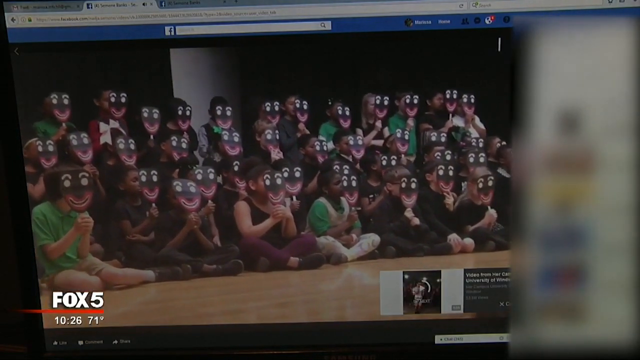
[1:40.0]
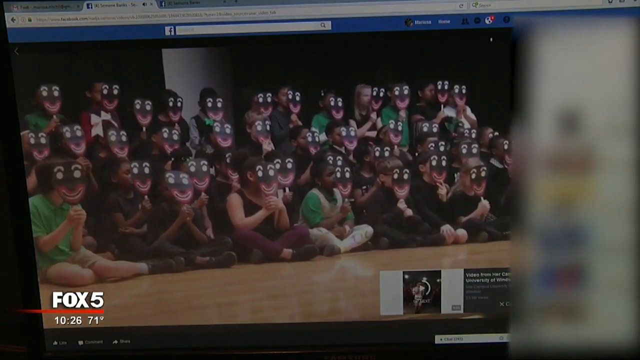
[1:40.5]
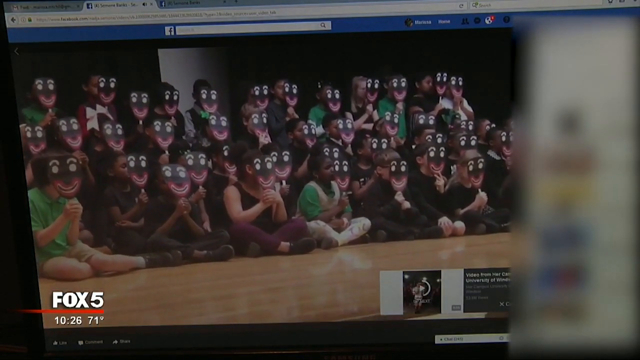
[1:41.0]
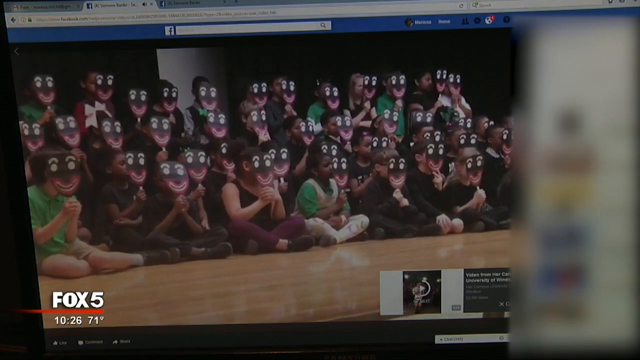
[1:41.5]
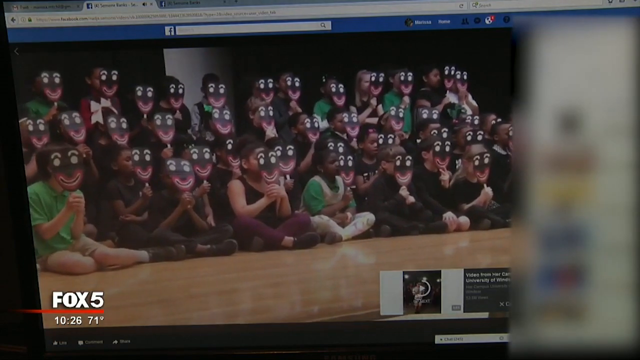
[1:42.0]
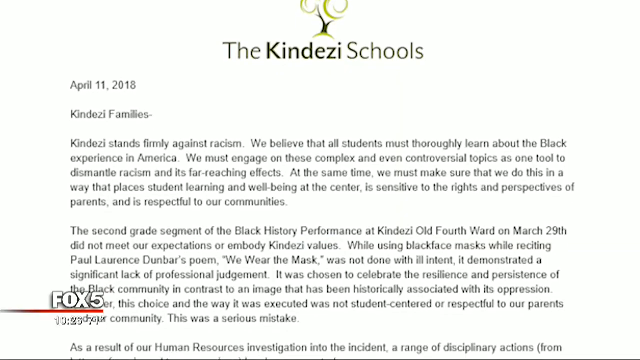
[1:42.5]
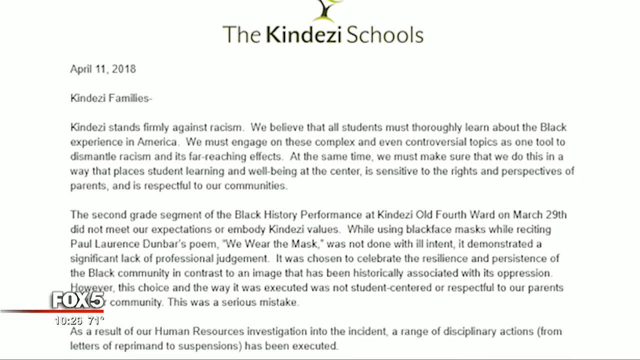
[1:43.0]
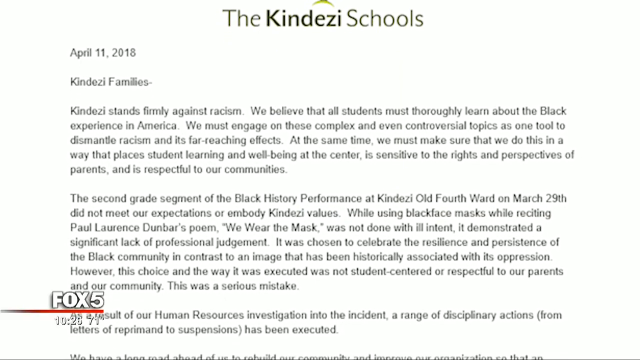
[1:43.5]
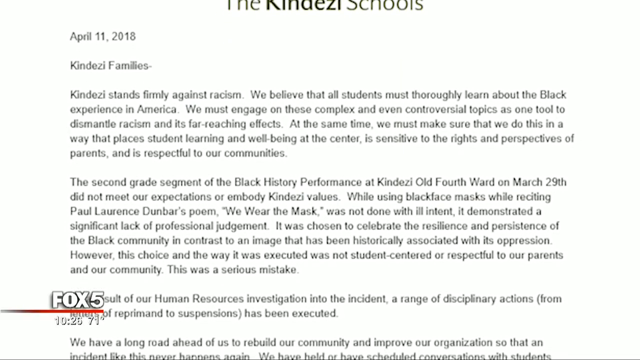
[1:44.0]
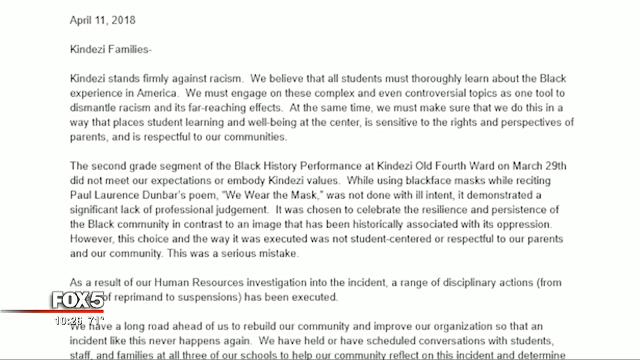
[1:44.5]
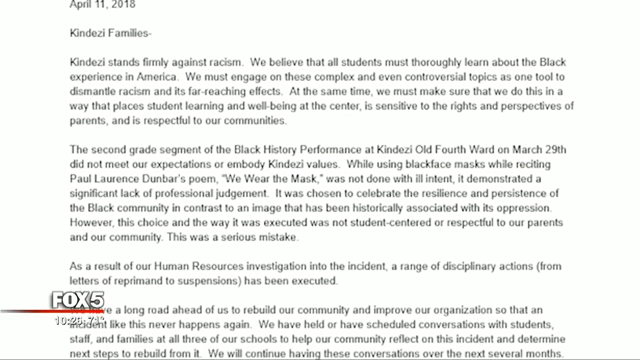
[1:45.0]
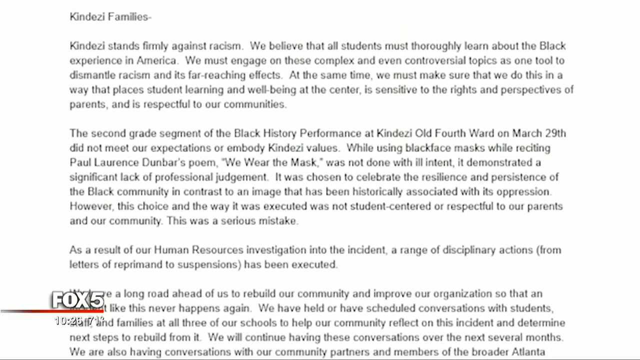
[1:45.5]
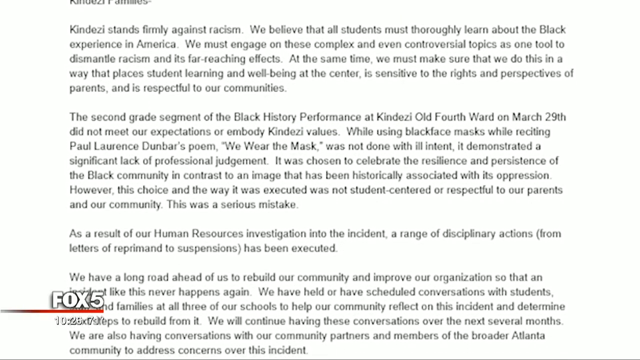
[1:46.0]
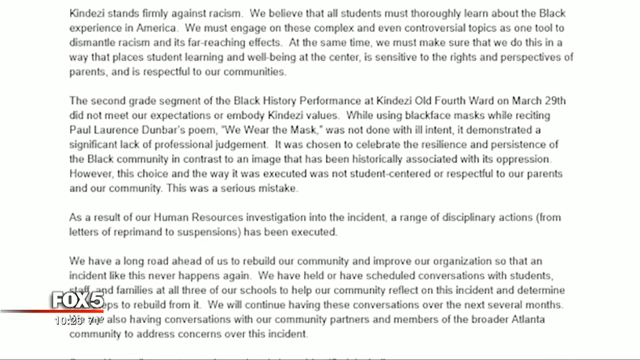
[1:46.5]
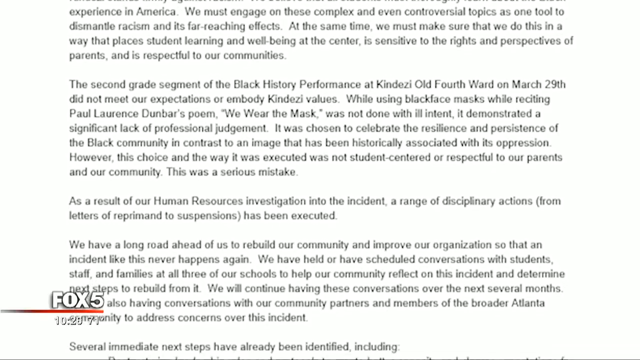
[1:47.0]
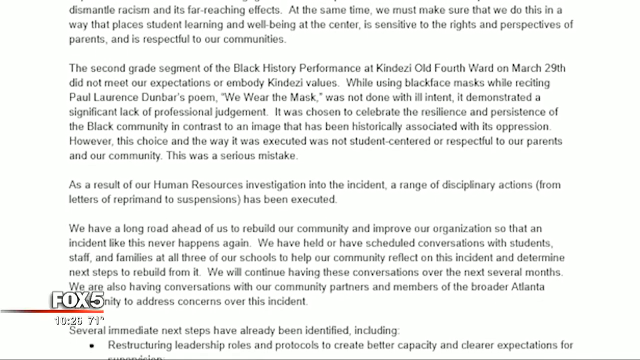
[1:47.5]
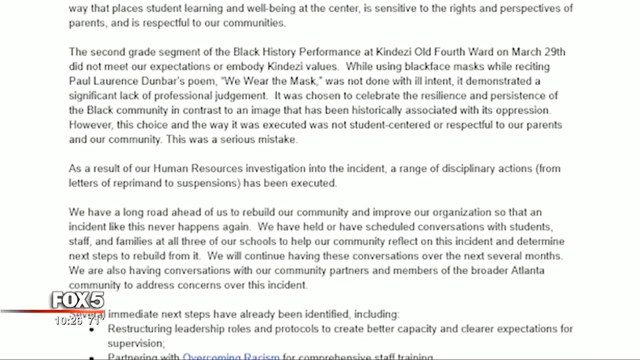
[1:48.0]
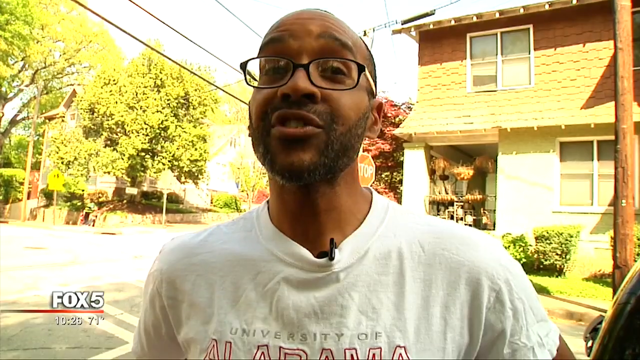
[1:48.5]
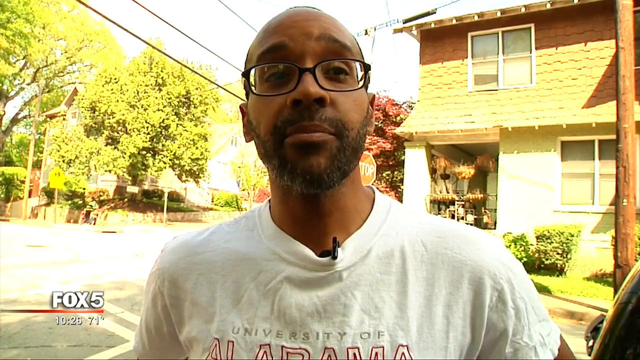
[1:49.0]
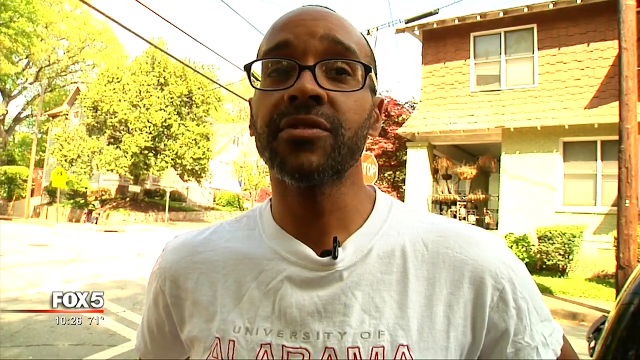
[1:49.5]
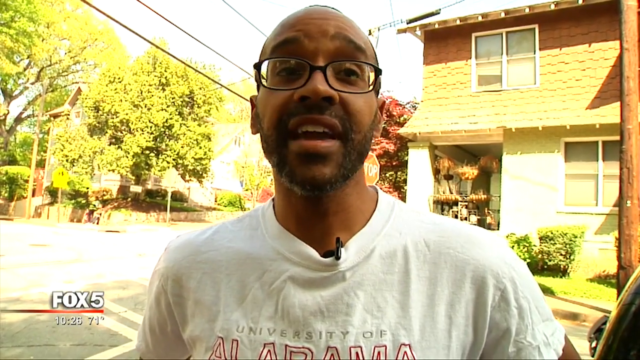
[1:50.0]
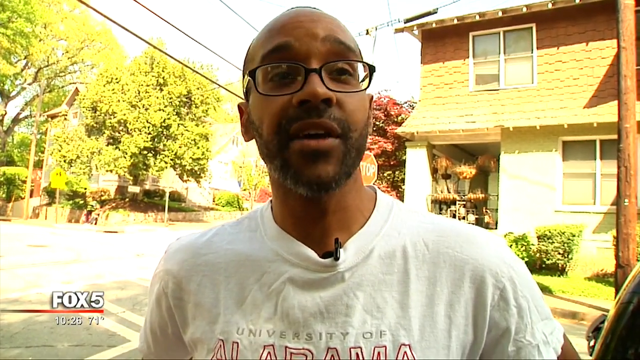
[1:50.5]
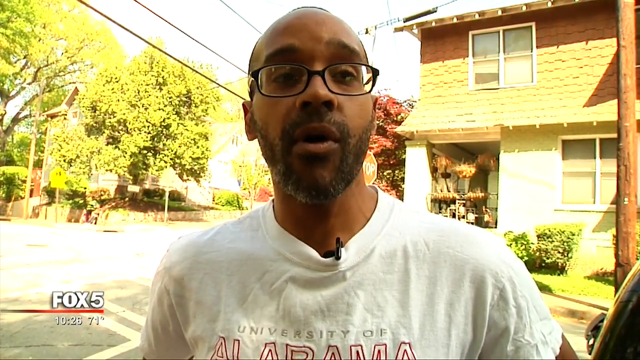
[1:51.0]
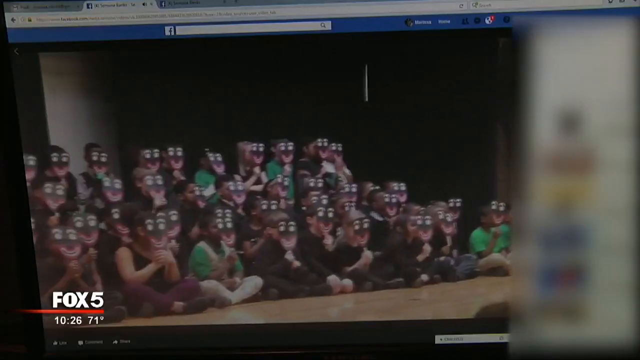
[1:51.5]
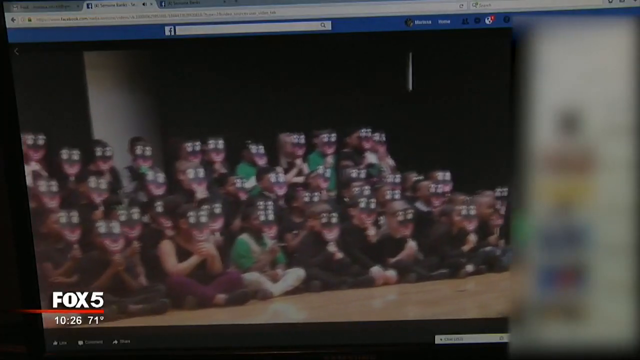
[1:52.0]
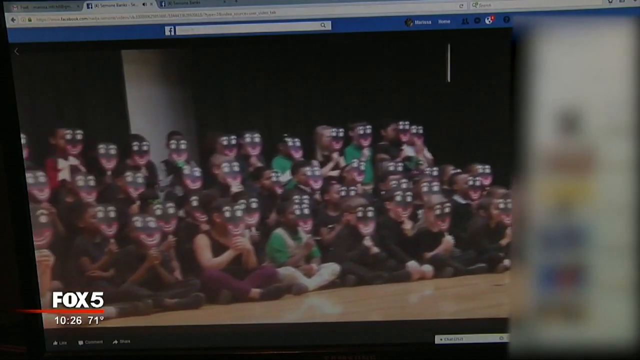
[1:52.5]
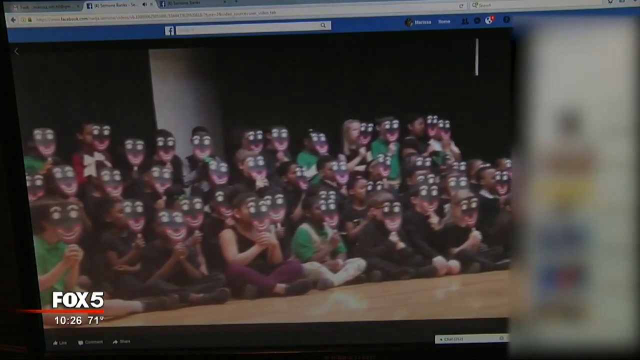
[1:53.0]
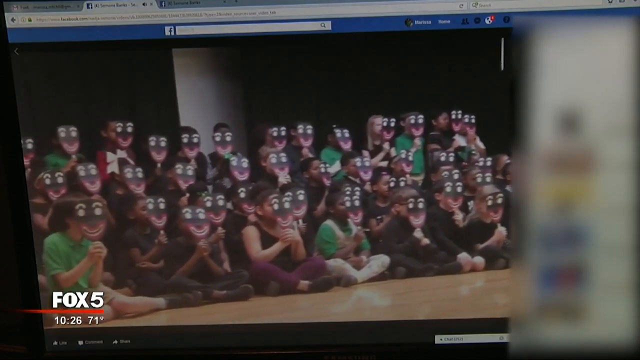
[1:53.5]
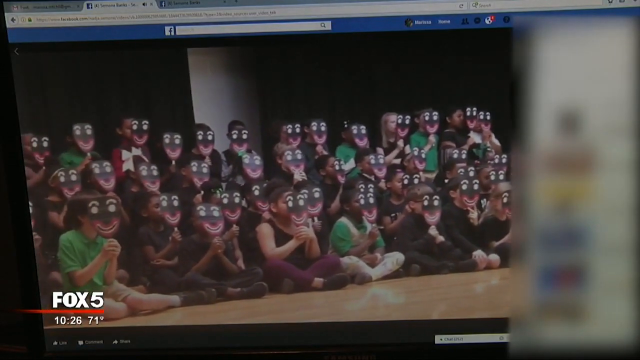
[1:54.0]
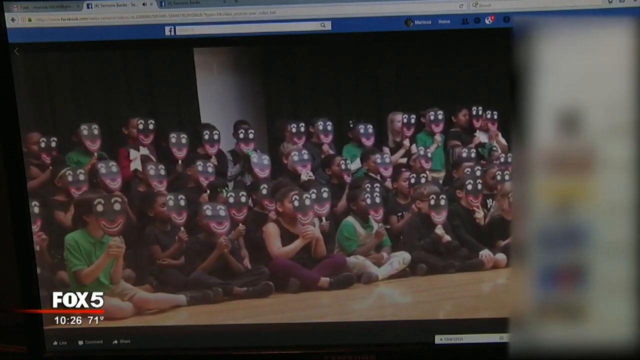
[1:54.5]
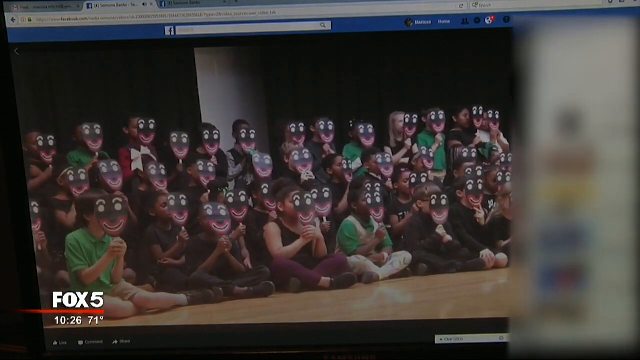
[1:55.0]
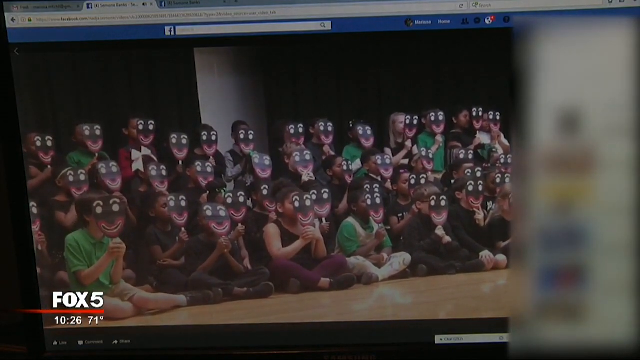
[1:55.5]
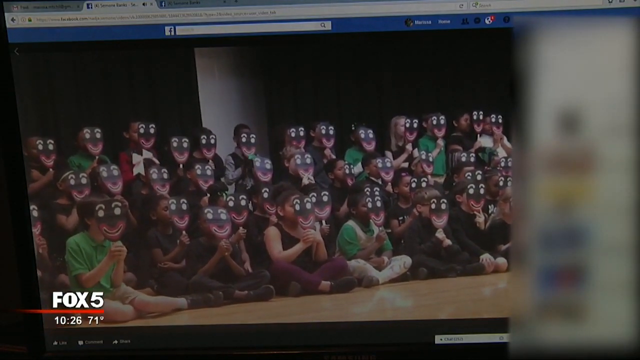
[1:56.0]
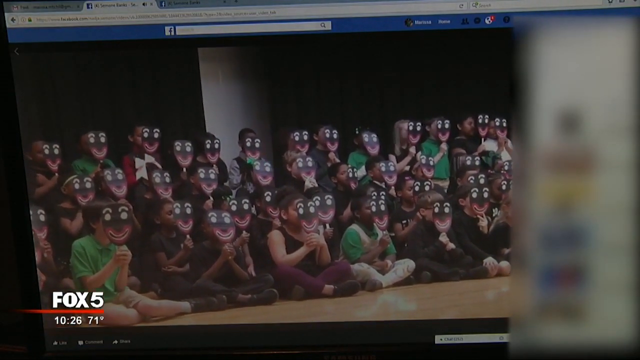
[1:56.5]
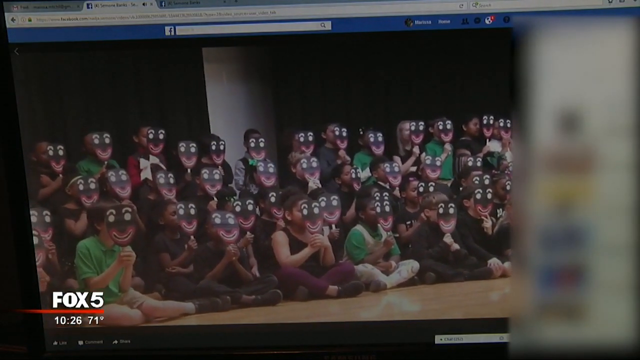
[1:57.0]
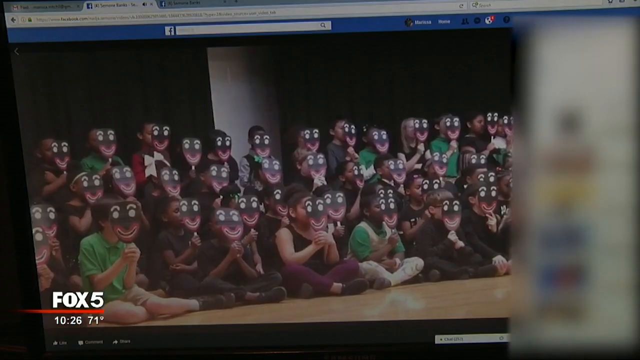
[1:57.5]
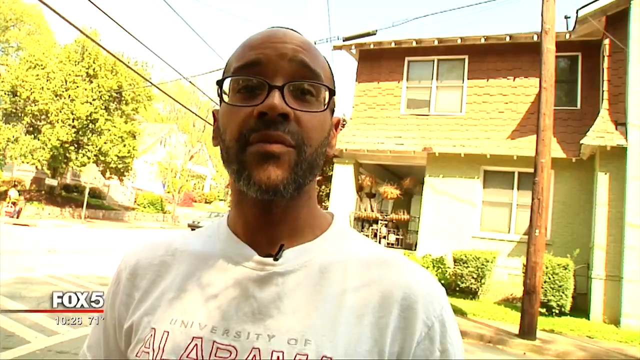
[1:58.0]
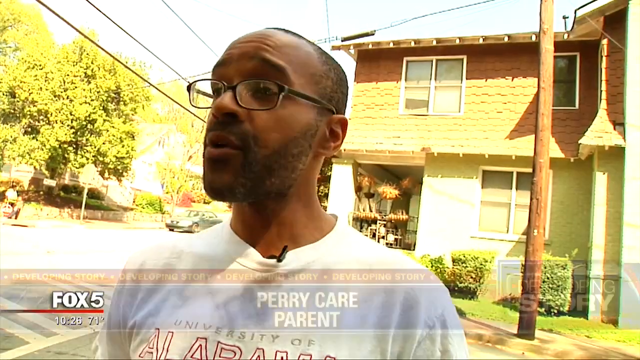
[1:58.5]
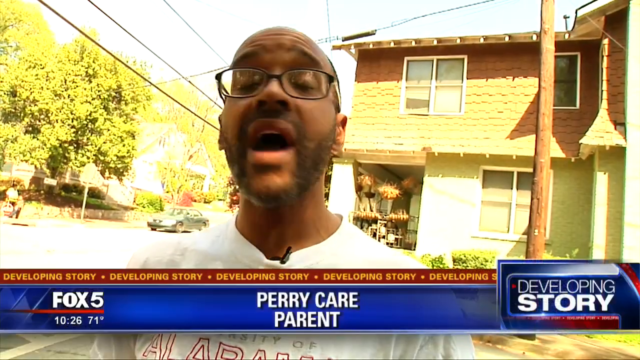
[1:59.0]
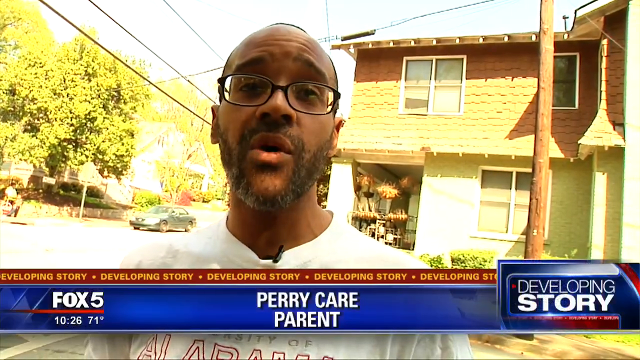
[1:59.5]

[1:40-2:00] The group of children hiding their faces with black and white masks is shown, kept anonymous to hide their identity. A letter released by Kindezi School on the 11th of April 2018 says "Kindezi stands firmly against racism". Fox 5 News then interviews a parent named Perry care, who responds on the issue of racism at Kindezi school. He is interviewed at home, and the background is somewhat blurry with a lot of light reflection. On his left side is a double-storey house, and near the house there seems to be a road where a car passes and a person carrying luggage, who looks Black, waits on the other side.